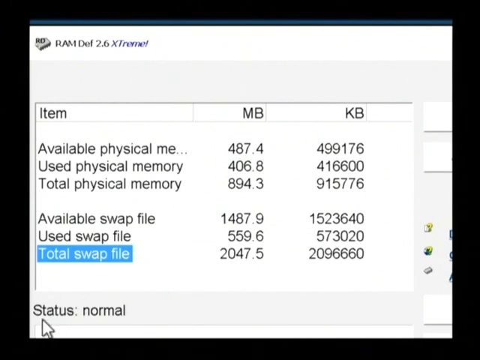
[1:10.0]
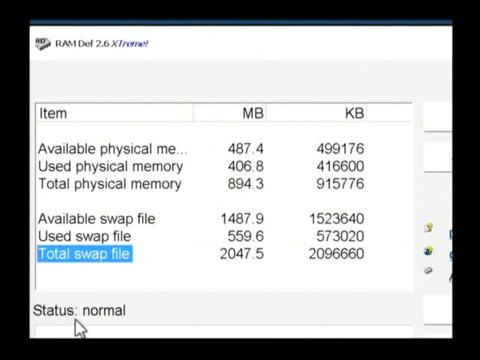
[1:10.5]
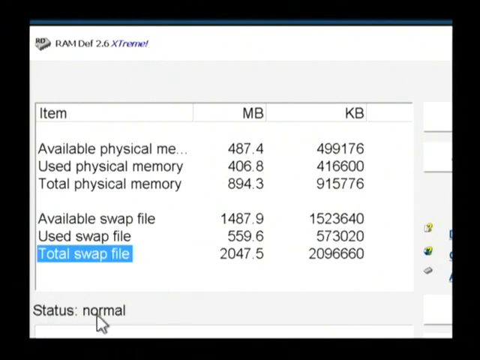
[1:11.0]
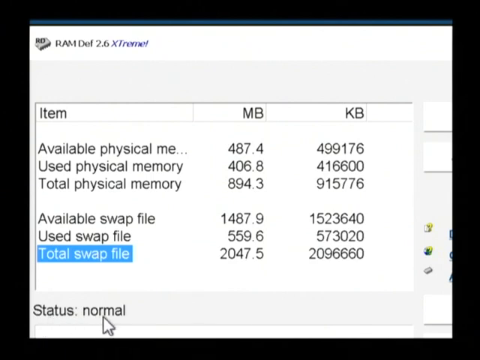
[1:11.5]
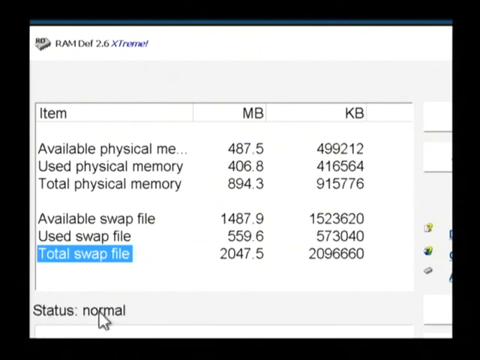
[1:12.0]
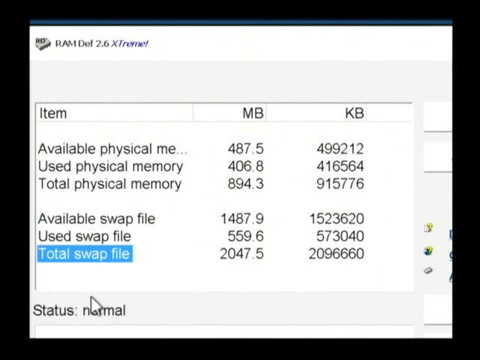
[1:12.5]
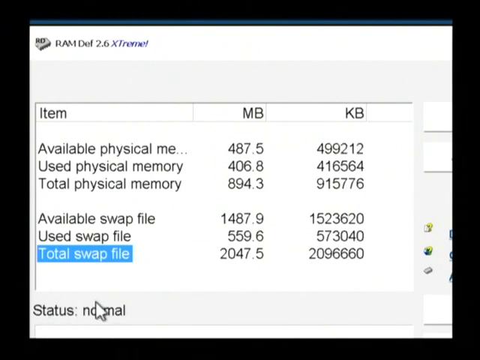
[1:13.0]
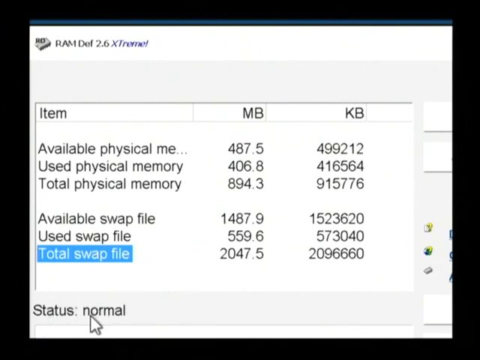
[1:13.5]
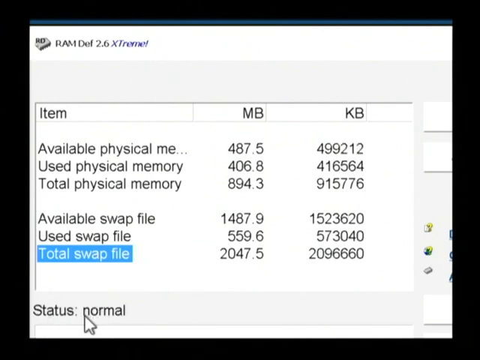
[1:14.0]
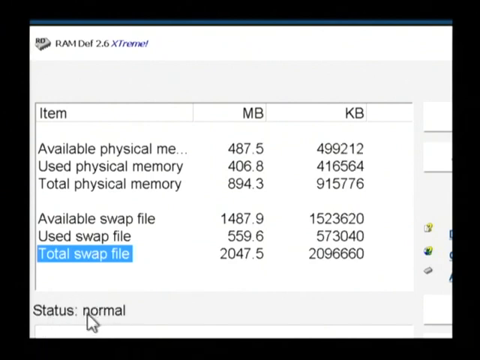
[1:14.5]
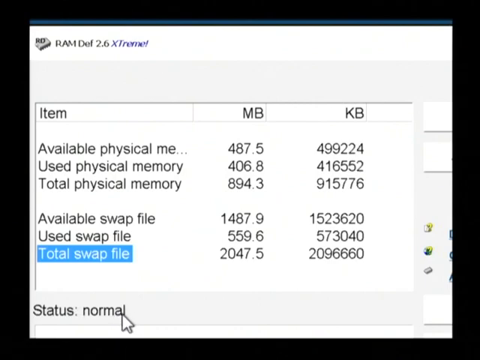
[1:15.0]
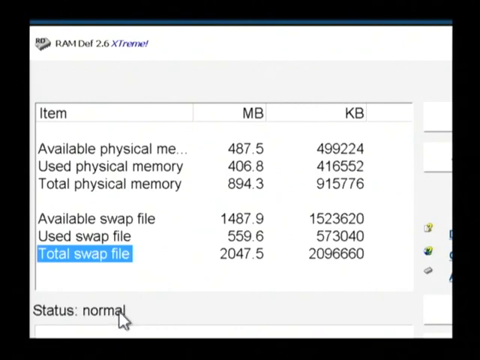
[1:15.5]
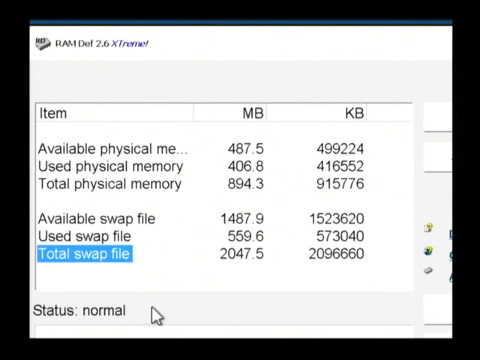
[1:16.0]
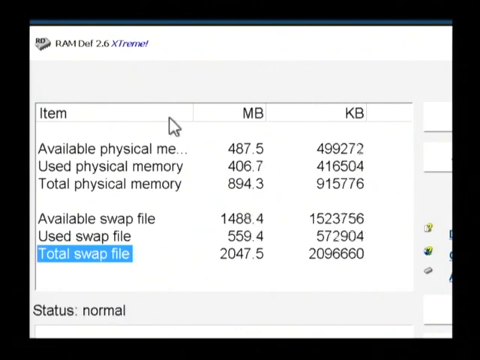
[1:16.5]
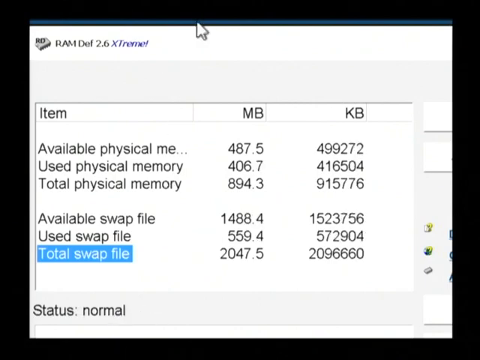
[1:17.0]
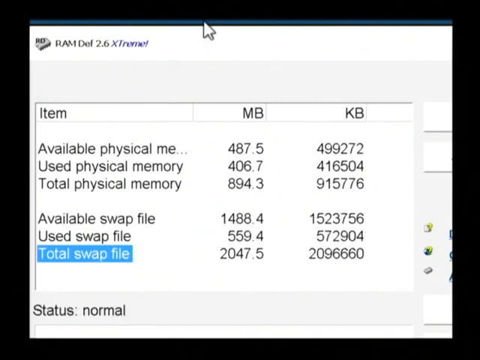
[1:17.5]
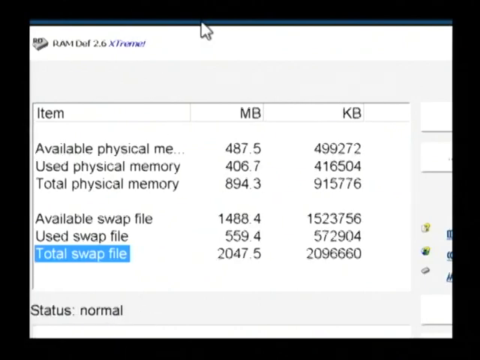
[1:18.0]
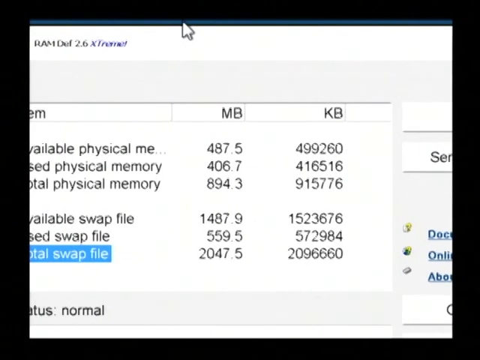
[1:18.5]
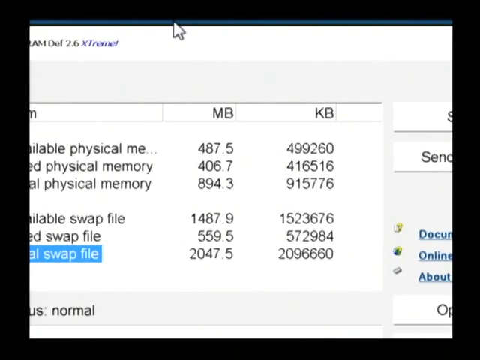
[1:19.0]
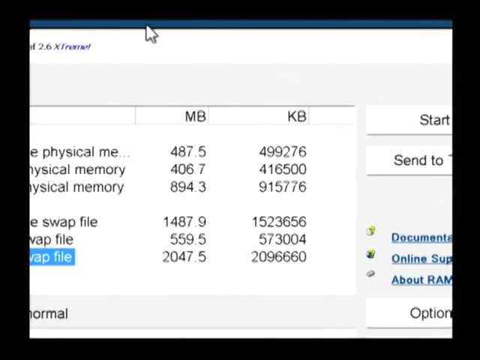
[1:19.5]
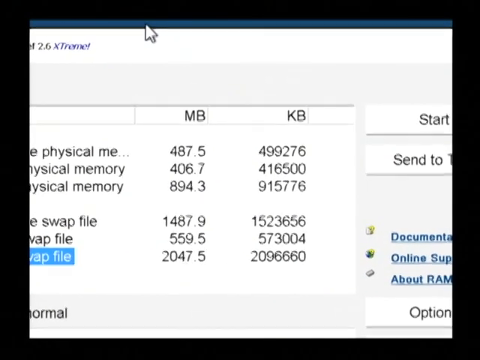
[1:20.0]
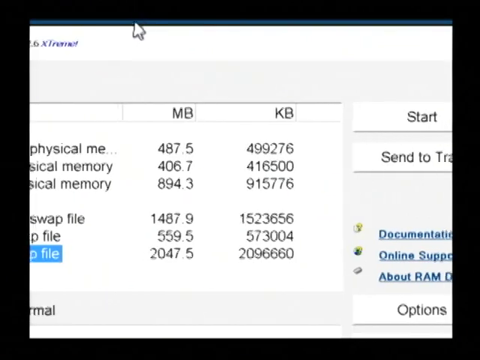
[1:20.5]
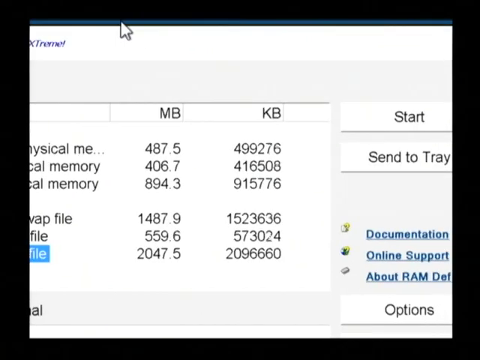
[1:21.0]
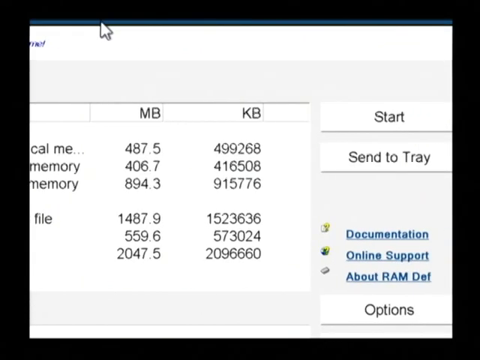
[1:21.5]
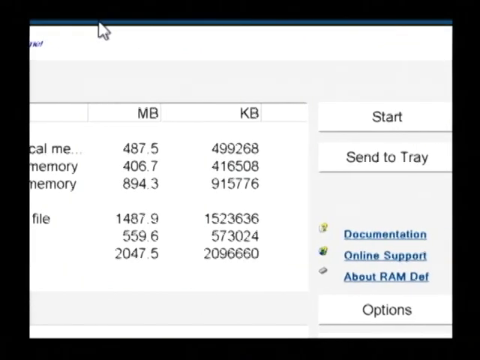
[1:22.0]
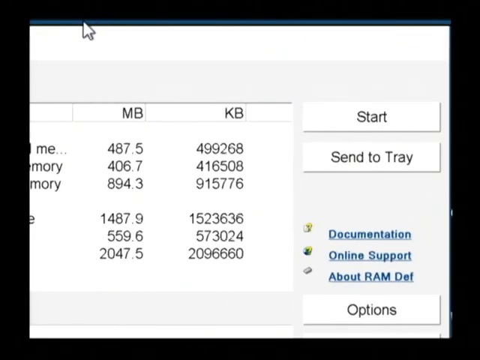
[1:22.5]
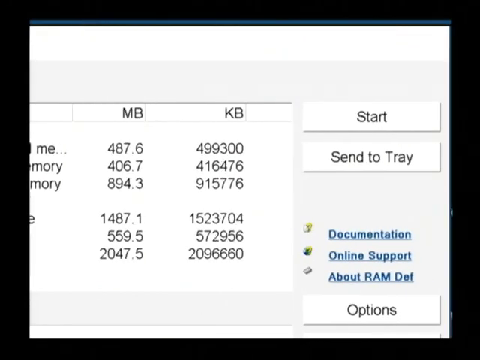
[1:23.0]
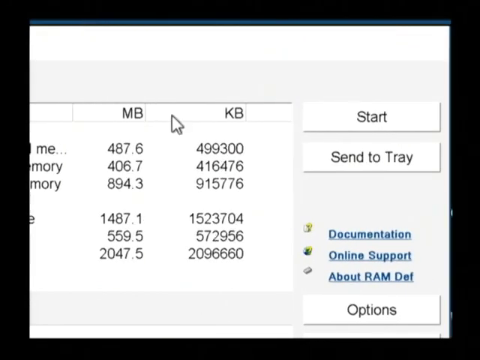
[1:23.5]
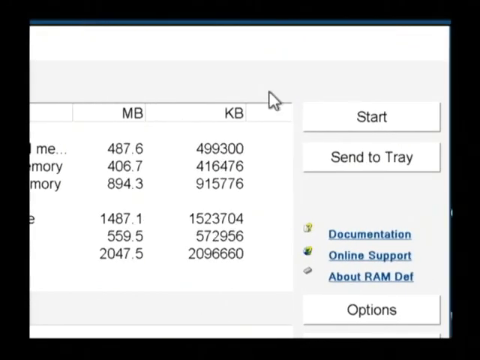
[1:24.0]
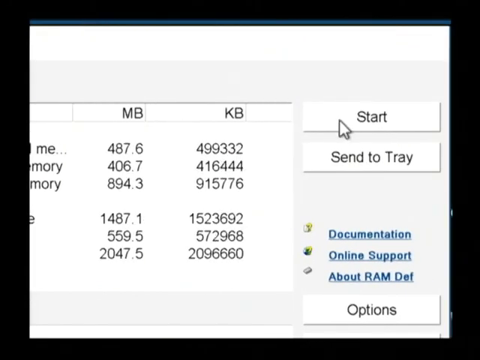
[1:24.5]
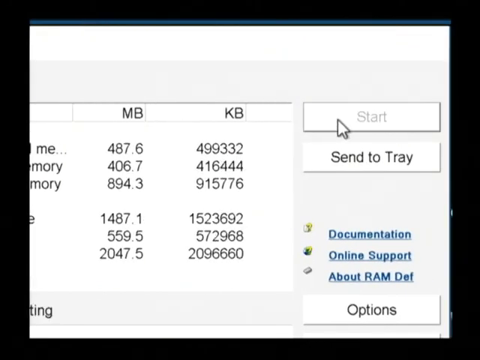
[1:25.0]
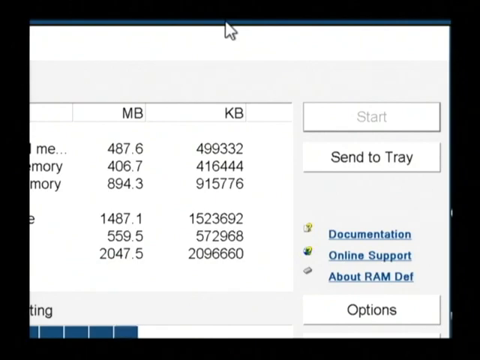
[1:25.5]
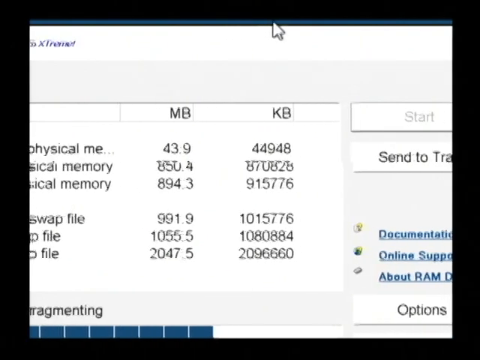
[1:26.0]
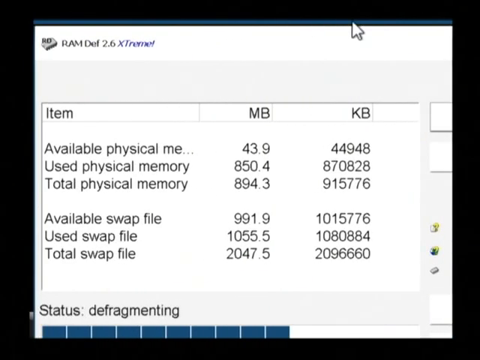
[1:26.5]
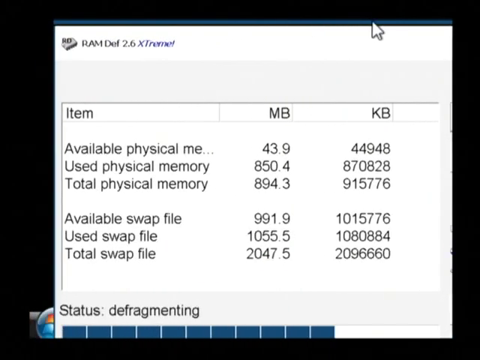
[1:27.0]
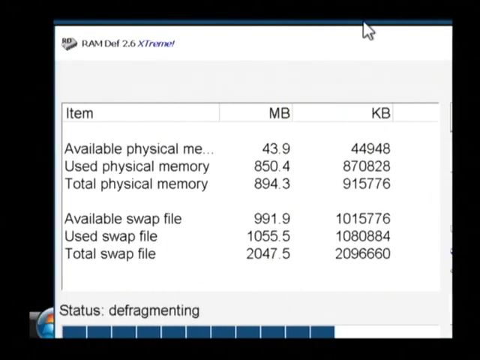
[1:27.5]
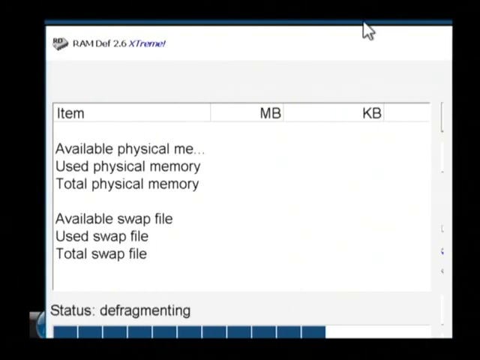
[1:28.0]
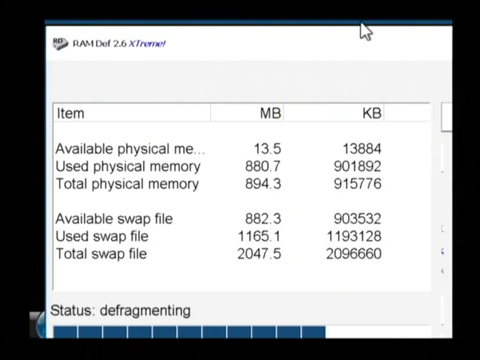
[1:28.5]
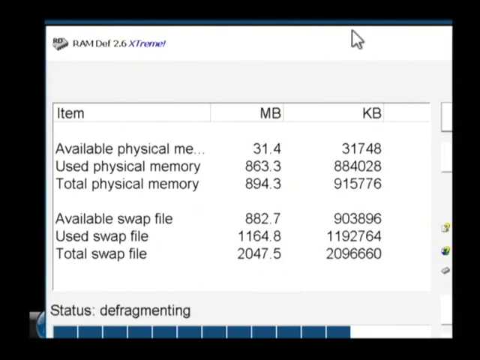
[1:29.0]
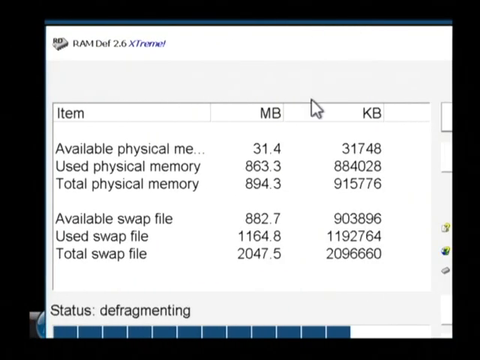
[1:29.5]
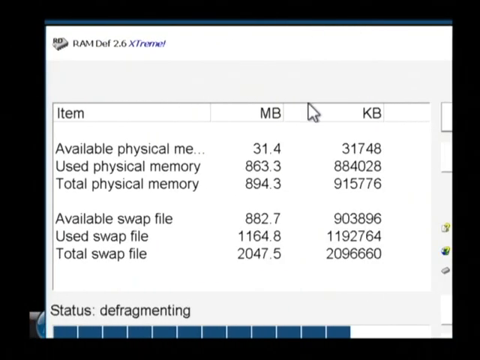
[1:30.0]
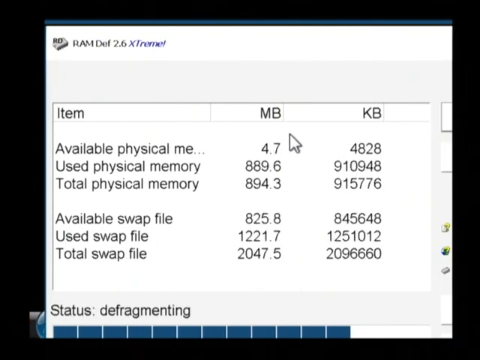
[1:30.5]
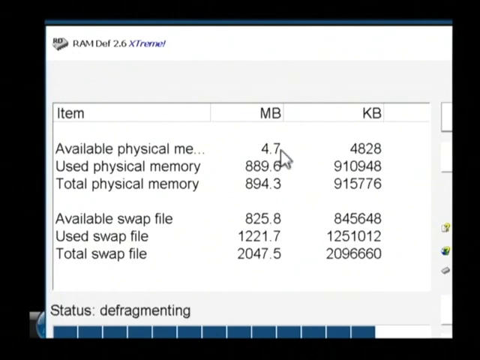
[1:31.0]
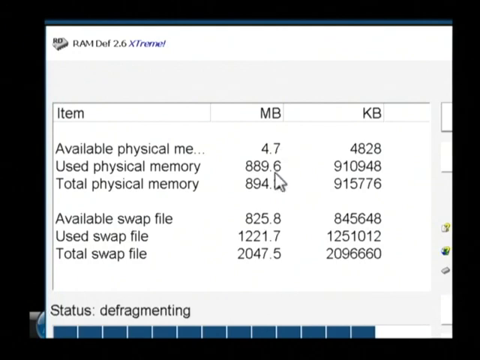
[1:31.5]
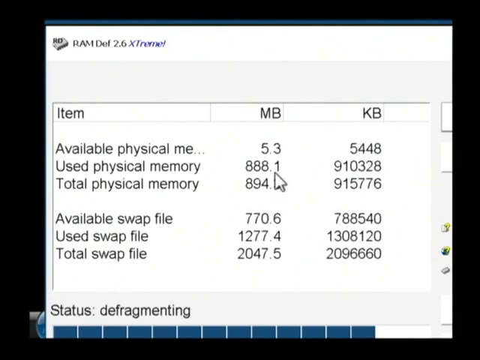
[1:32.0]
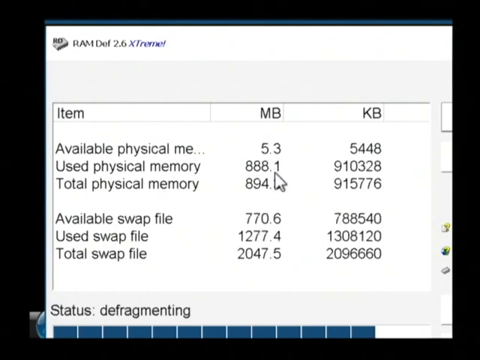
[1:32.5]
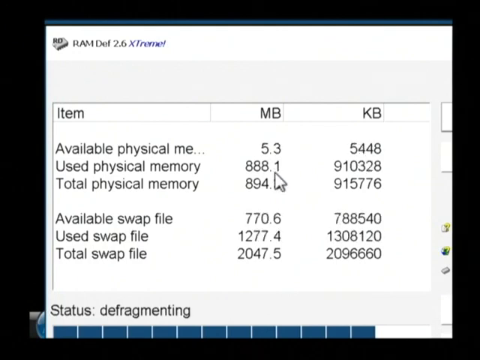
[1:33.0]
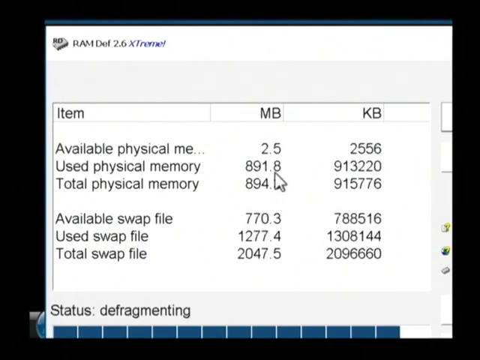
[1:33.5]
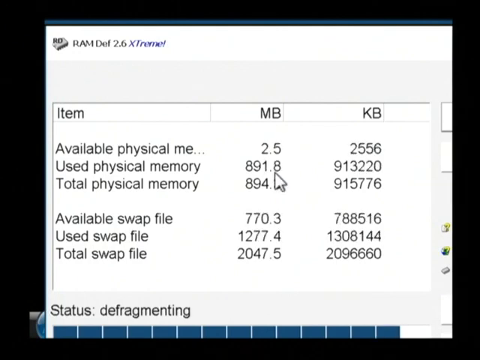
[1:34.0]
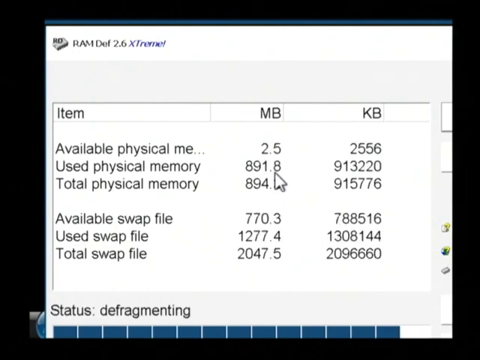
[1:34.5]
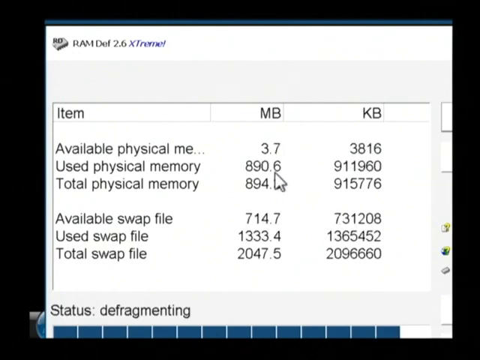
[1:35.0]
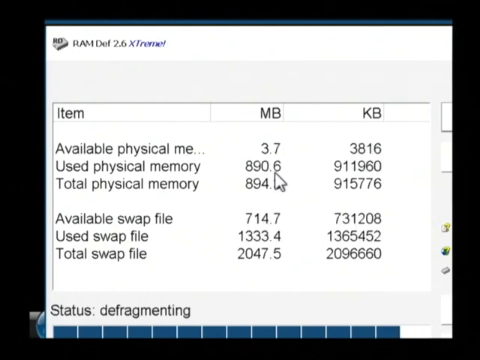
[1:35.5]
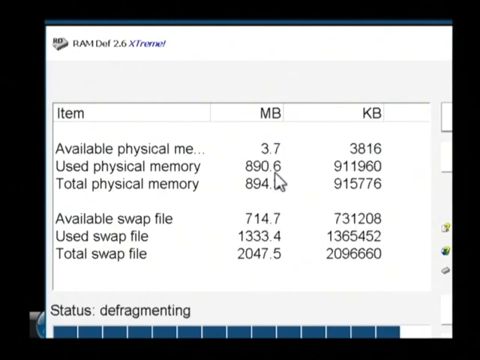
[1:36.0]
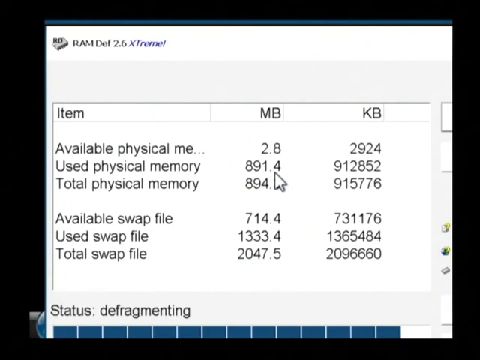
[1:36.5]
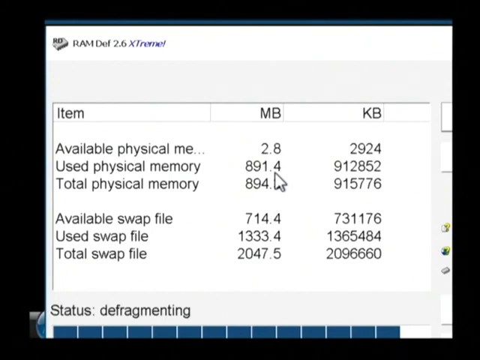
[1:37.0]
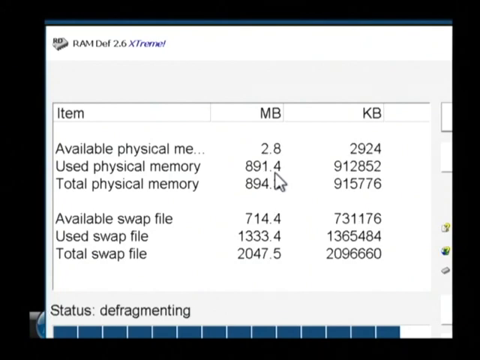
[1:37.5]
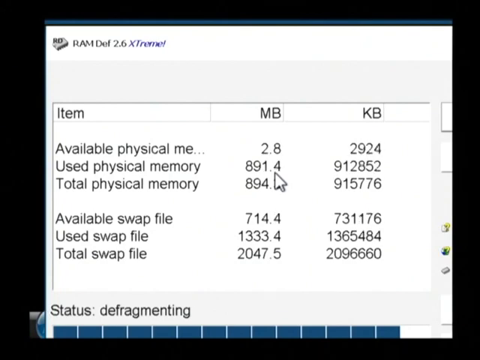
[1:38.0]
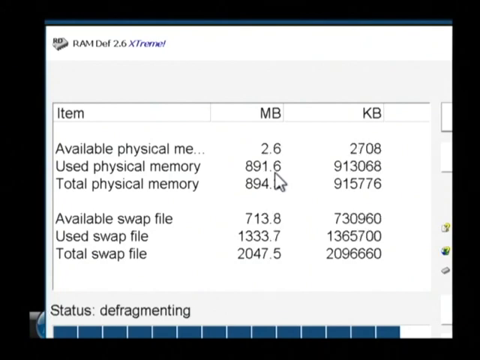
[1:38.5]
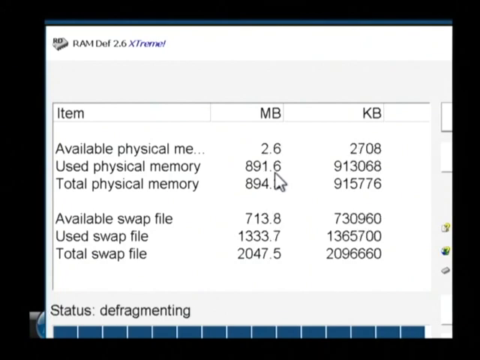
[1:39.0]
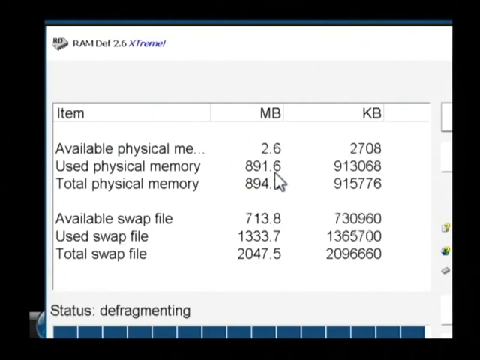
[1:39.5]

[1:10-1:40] Using the mouse, he scrolls around the RemDev 2.6 extreme app, moves the cursor around "Status normal", scrolls back up and moves the app to the left. There are Start and Send to Tray buttons. He presses Start, and the app starts counting the MBs and KBs for available physical memory, used physical memory and total physical memory, as well as for available swap file, used swap file and total swap file. The MB and KB values for all the items appear to be changing: one that started at 13.4 is now 543 MBs and decreasing, while others increase, as if the app is generating the MBs and KBs.